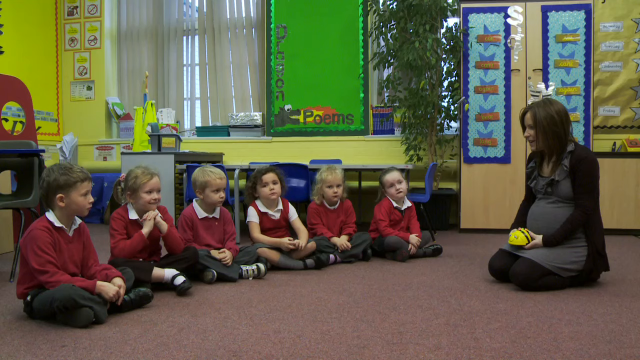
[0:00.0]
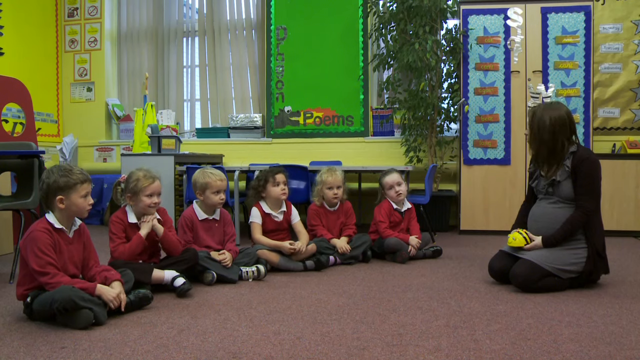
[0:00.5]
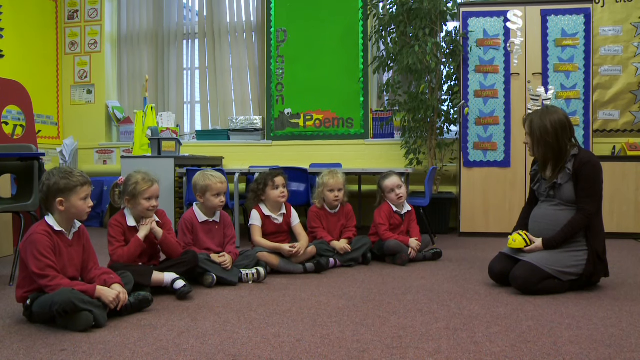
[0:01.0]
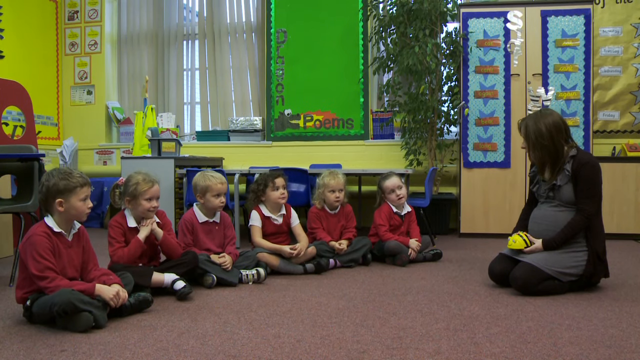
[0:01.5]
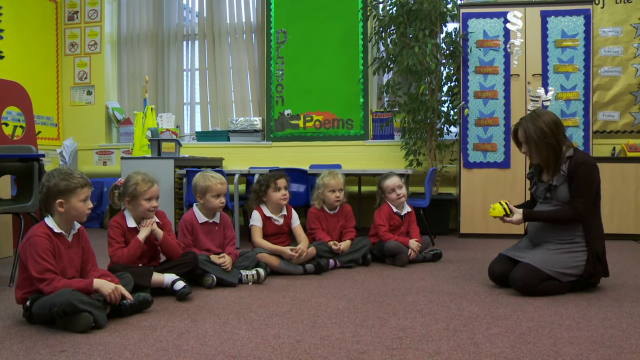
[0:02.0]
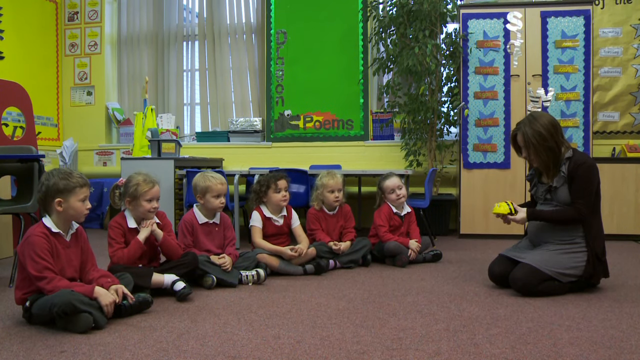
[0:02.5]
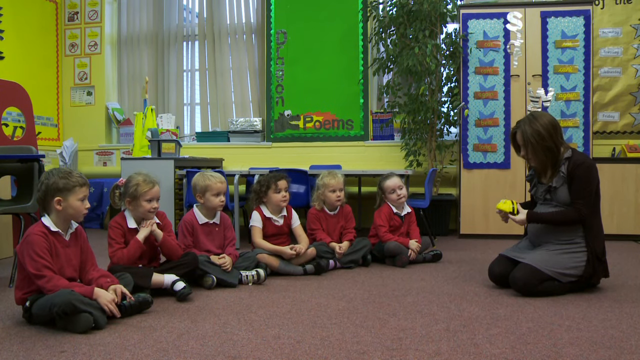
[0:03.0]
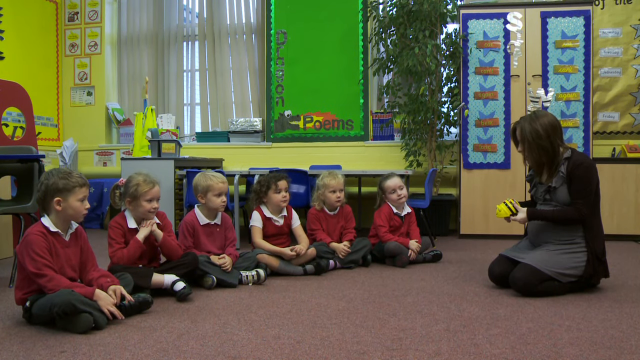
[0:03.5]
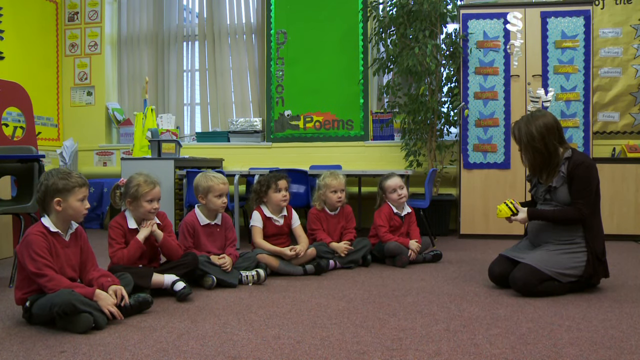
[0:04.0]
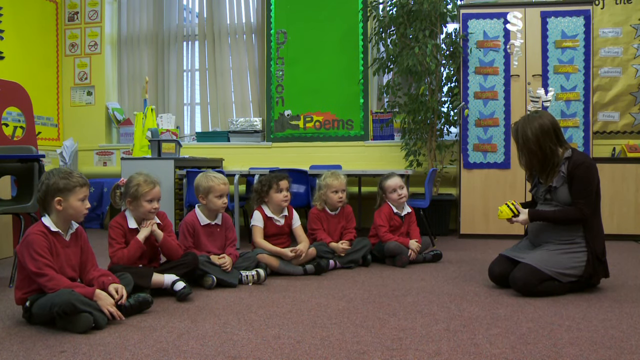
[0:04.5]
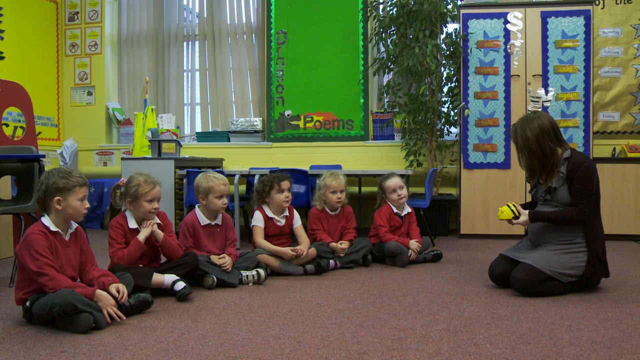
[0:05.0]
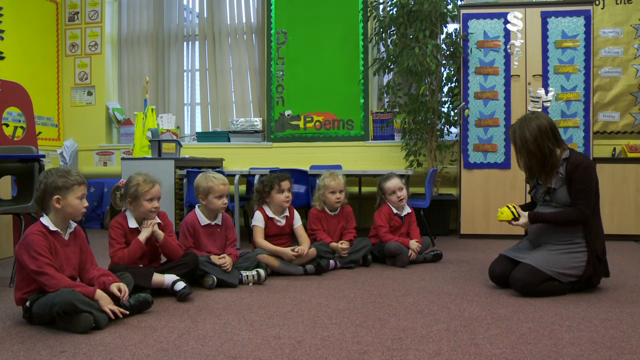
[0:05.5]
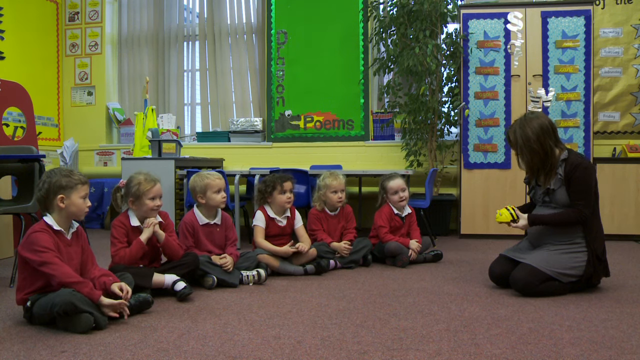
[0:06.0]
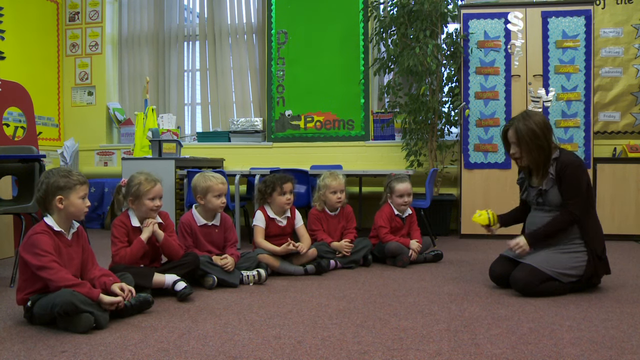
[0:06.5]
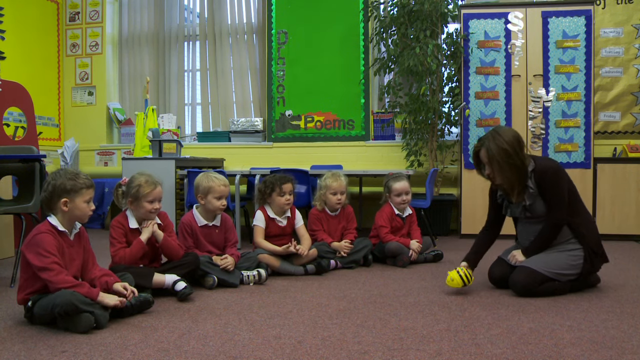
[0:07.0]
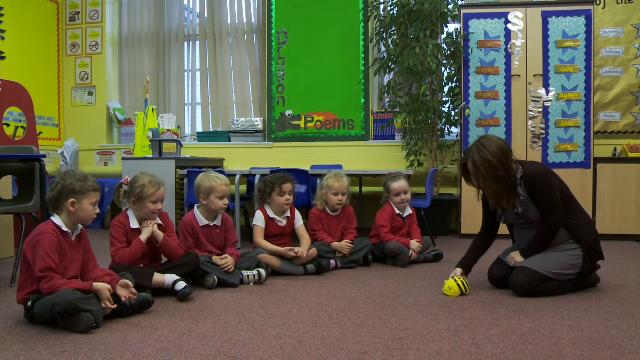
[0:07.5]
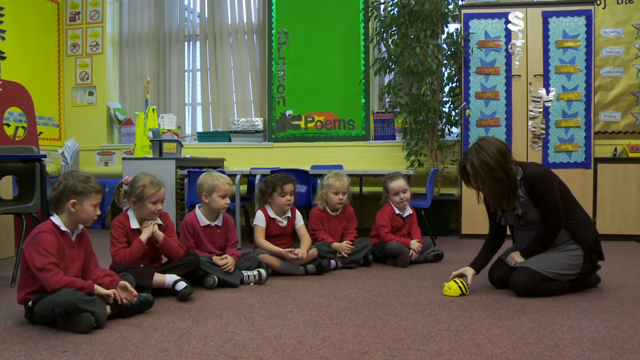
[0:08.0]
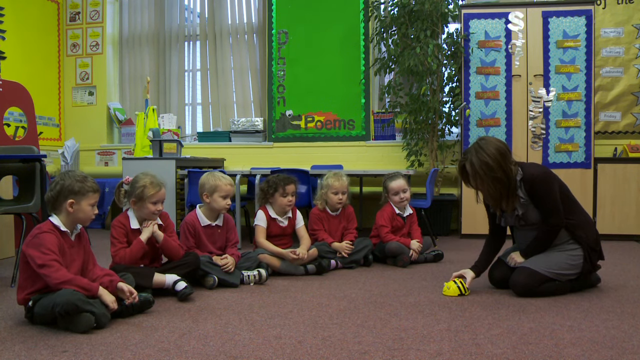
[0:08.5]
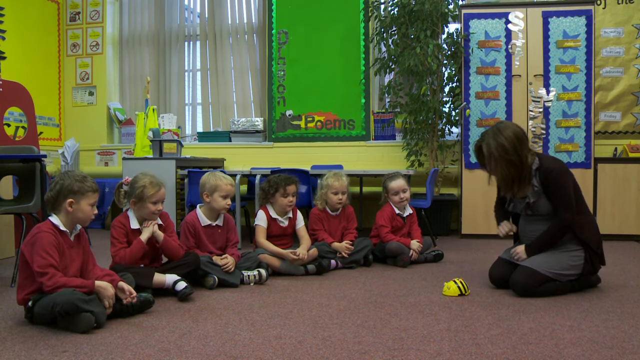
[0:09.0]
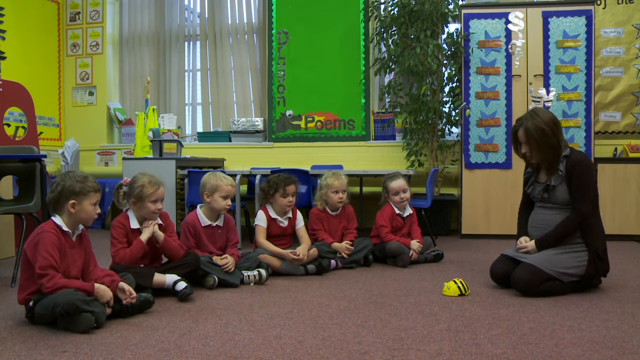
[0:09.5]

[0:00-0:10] A woman is in an elementary school classroom with elementary-age children, who are all sitting on the floor. The woman, who is quite pregnant, kneels on the floor. She wears black stockings, a gray dress and a black sweater, and has dark brown hair and paler skin. She talks directly to the children, who are seated in front of her in somewhat of a semicircle; her face cannot be seen directly. All of the children wear red and gray uniforms in different variations, all with red tops and gray bottoms. The first child wears gray pants, black shoes and a white collared shirt under her red sweater, with her hair pulled back in a ponytail with a headband. The second child wears the same outfit, but her collar is tucked into her sweater so it cannot be seen; she has shoulder-length blonde hair. All of the children have their hands either folded in front of them or under their chins. The carpet is a somewhat dark gray-pink color, and the classroom has yellow walls.